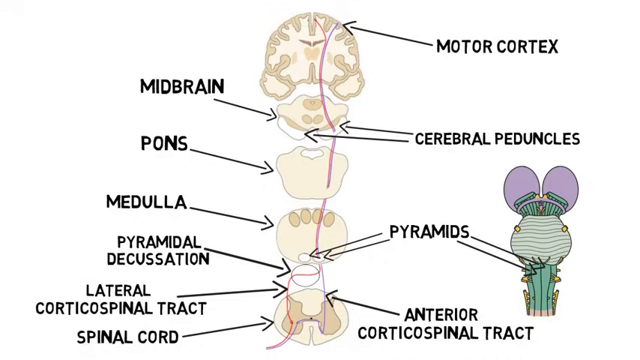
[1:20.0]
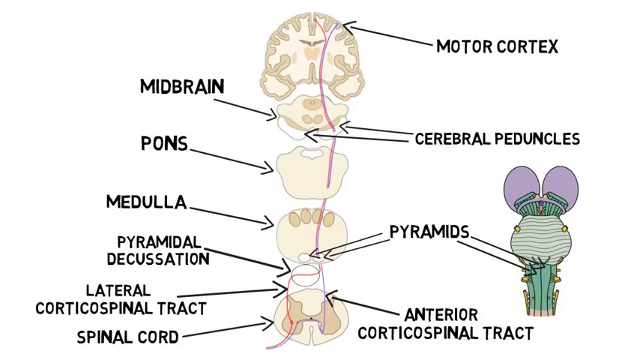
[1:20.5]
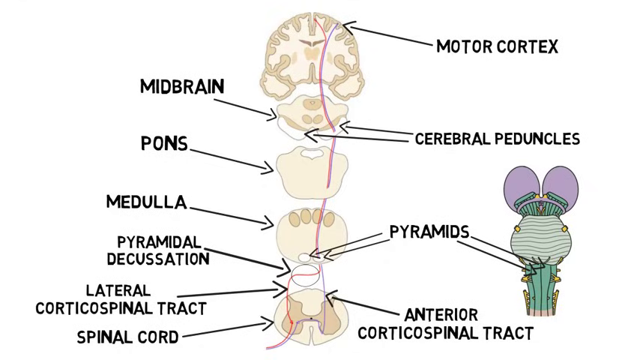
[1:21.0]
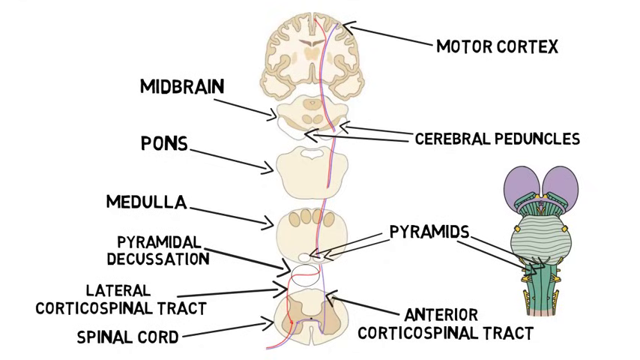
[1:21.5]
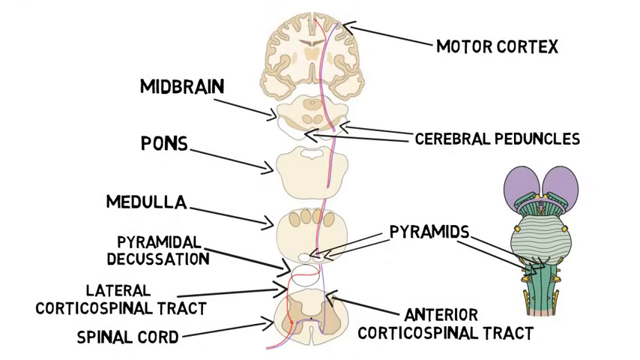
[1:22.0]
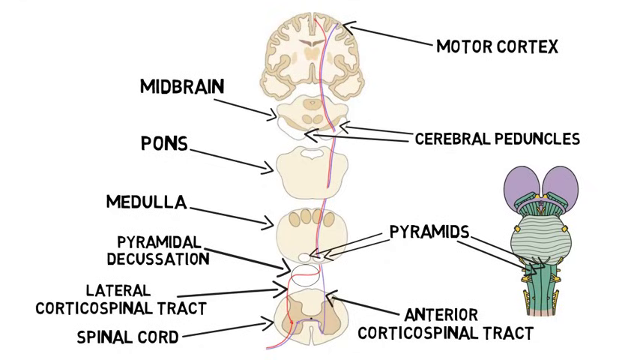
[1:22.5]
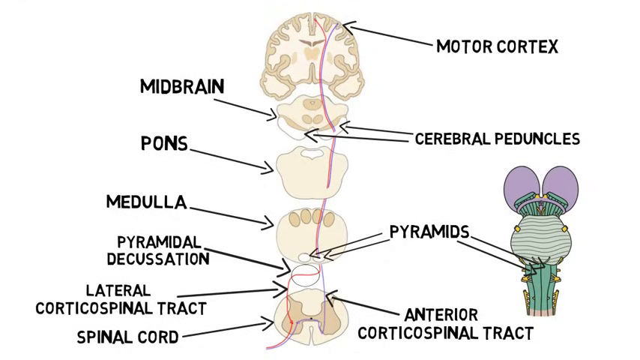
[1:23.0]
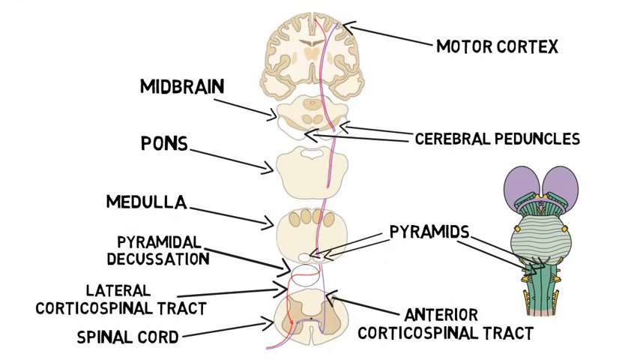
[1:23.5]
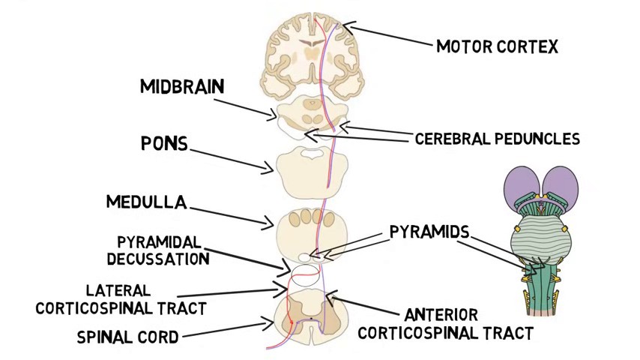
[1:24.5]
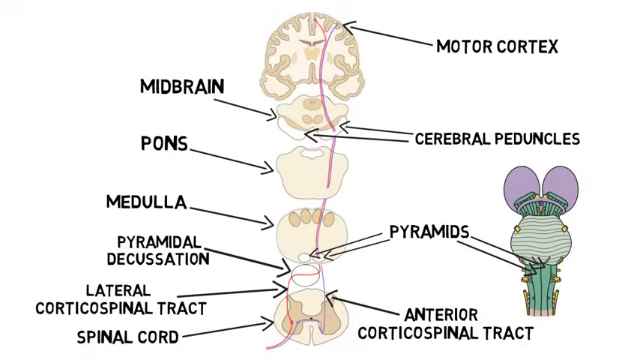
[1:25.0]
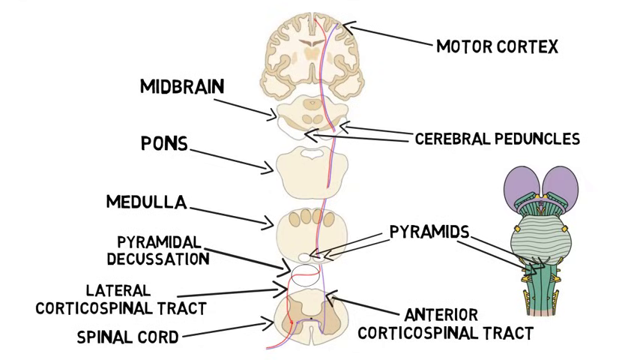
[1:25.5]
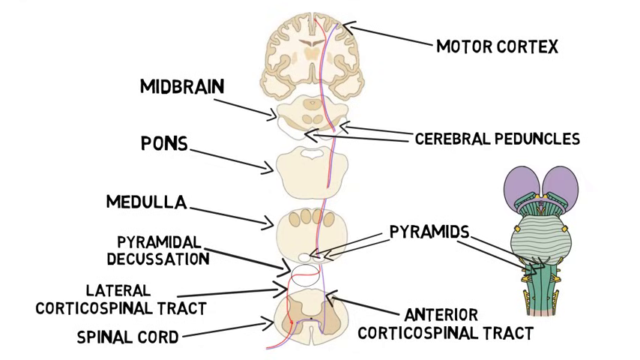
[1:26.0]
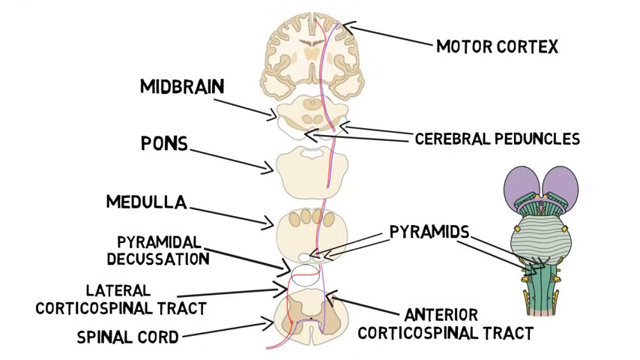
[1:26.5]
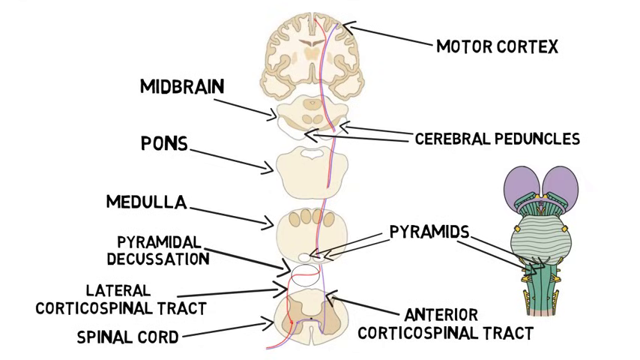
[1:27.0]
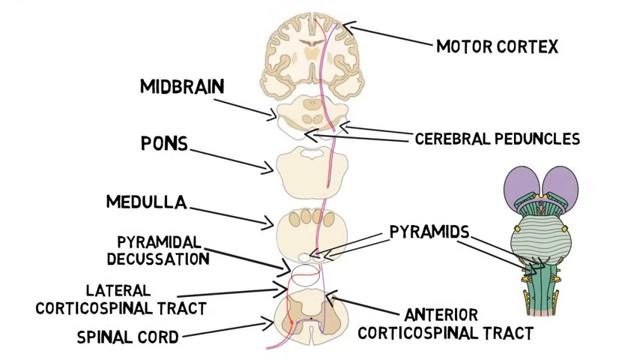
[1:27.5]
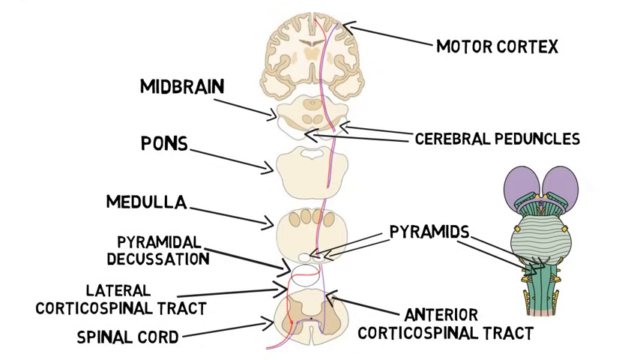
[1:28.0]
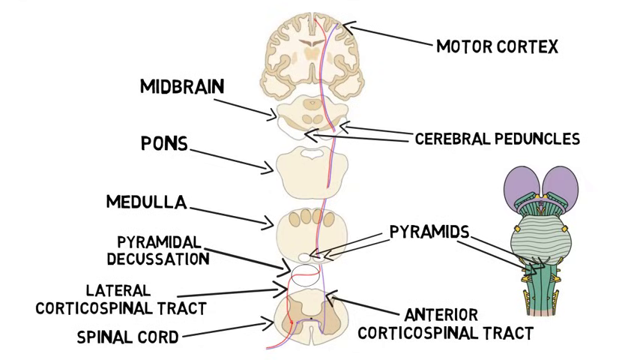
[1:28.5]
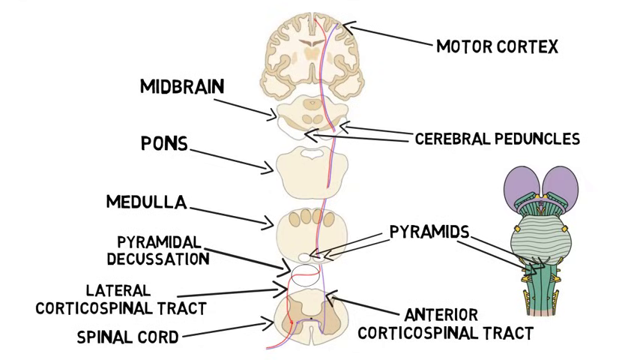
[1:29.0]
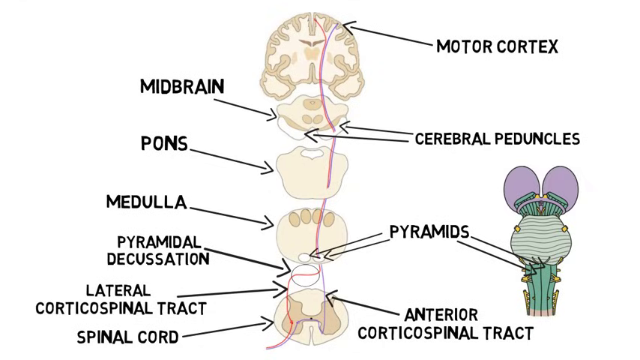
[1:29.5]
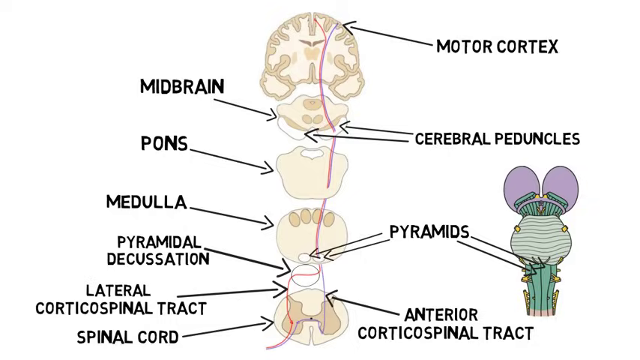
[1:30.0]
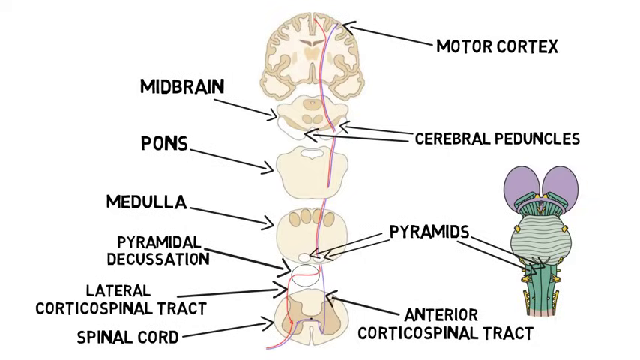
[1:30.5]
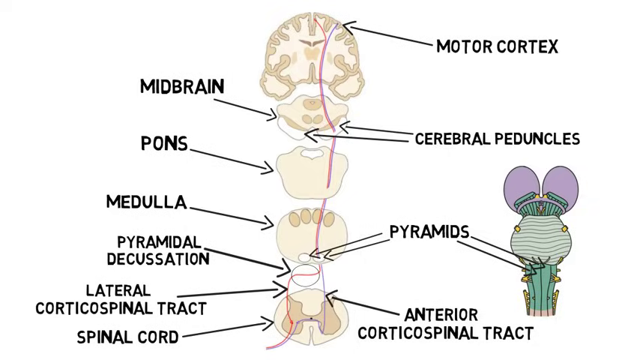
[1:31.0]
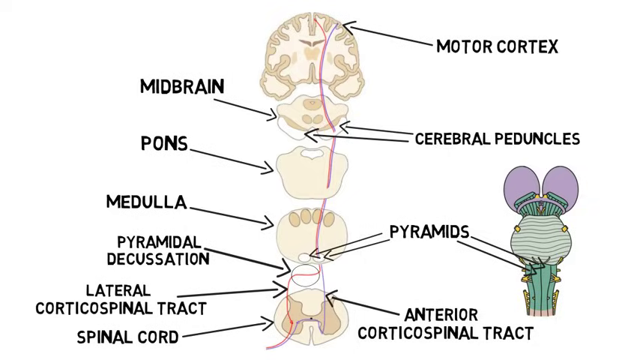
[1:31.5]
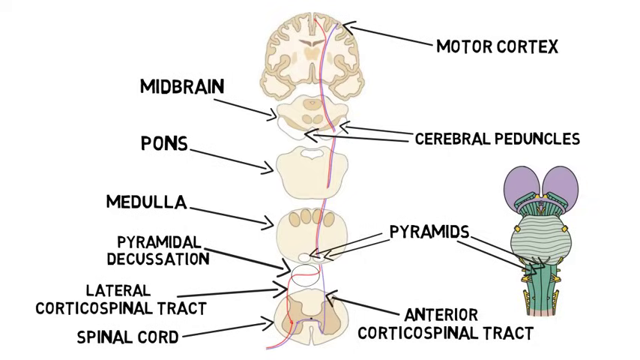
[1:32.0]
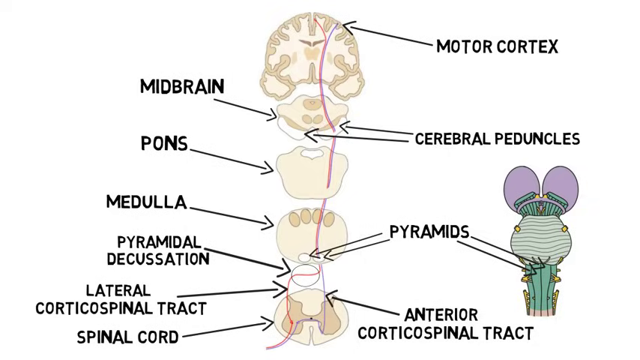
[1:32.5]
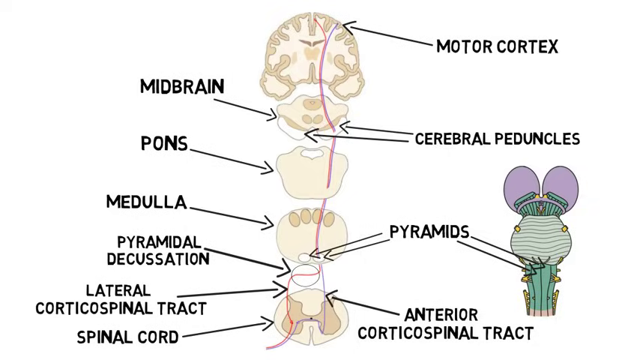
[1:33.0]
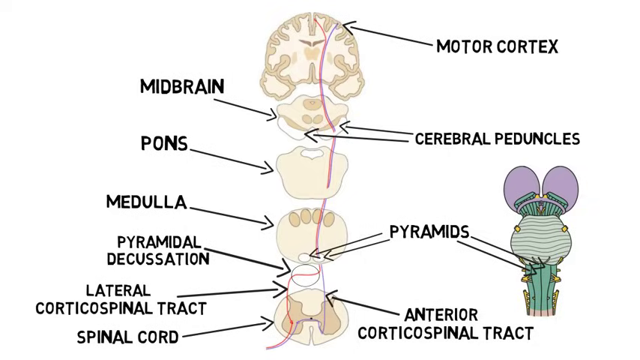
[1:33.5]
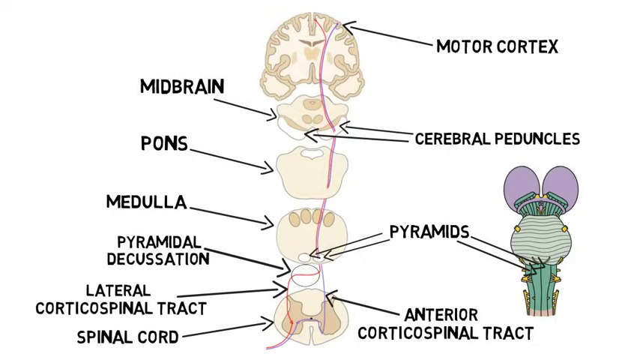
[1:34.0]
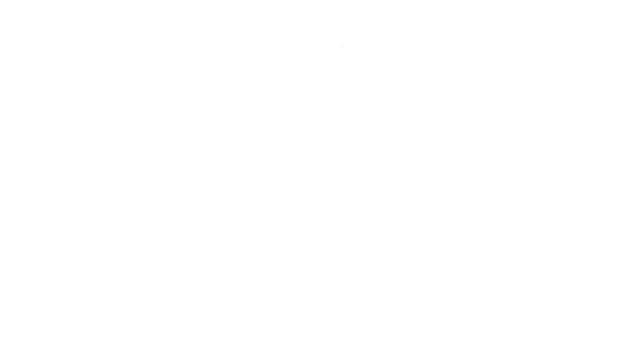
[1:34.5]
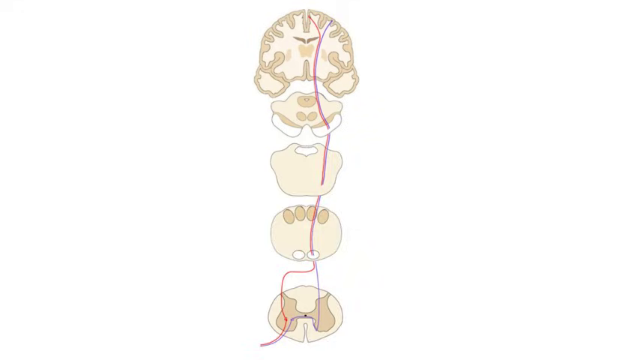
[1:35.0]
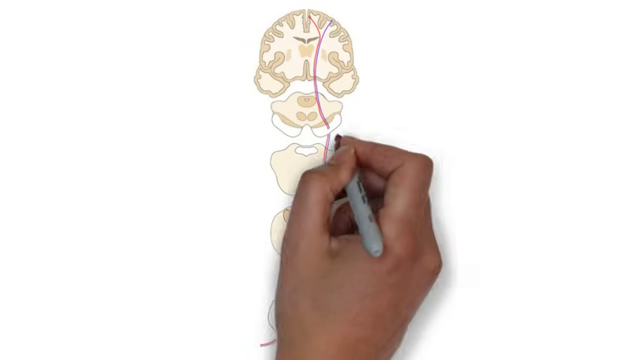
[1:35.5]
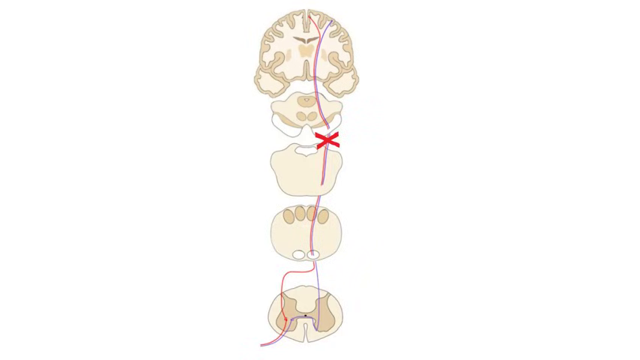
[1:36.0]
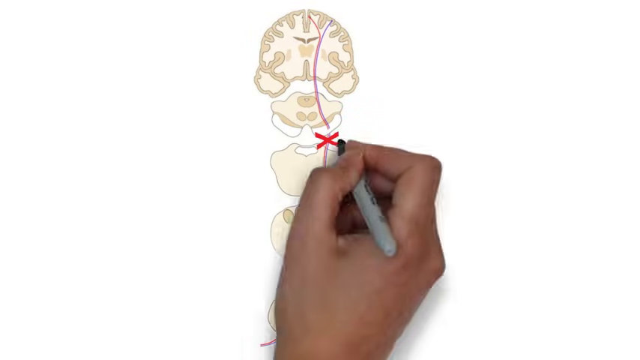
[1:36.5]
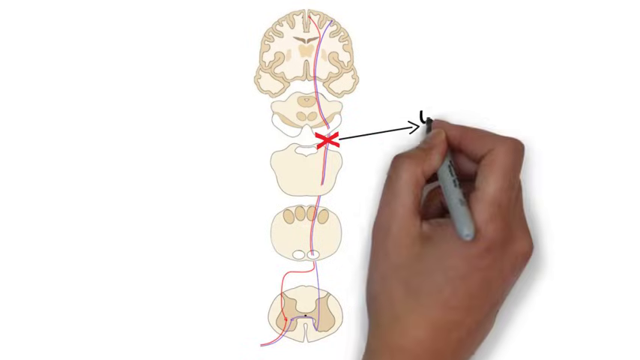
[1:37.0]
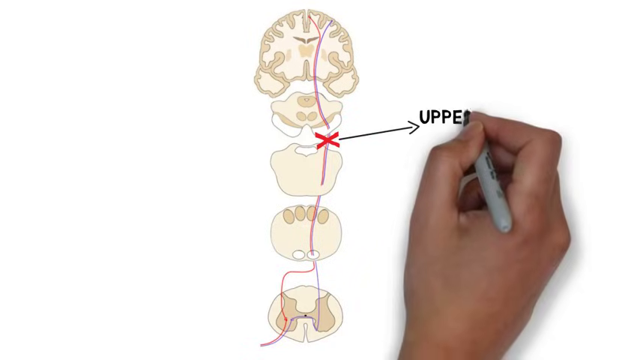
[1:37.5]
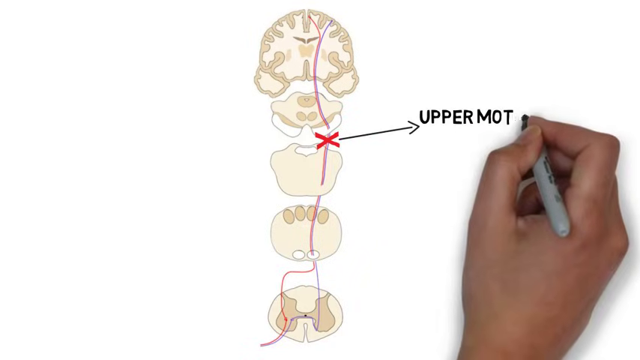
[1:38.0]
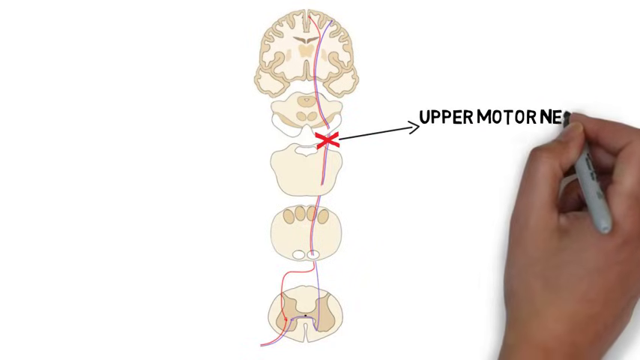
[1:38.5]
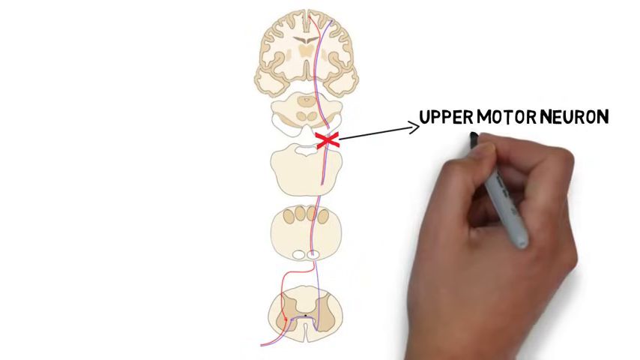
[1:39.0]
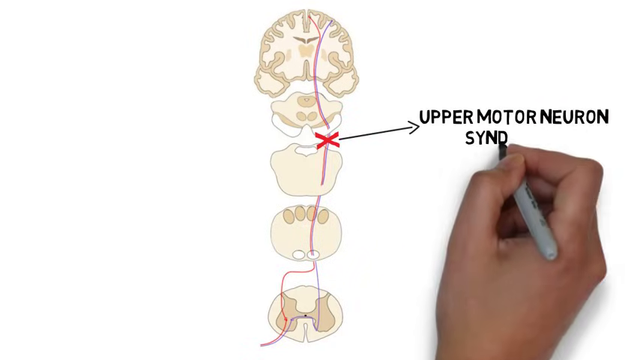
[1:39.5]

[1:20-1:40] The diagram with all its arrows and labels remains on screen, then flies to the left, leaving the screen empty and white. The hand drags in another diagram, which looks like the same diagram without the labels. With a red sharpie, the hand draws a red X in the middle part of it, then draws an arrow pointing from the red X and writes "upper motor neuron syndrome" at the end of the arrow. The right hand holds the sharpie as it writes, and the diagram has no other labels besides the X, the arrow and this label.